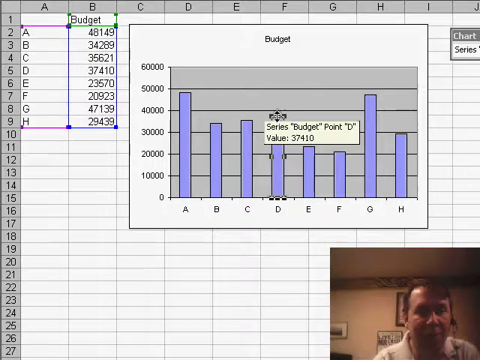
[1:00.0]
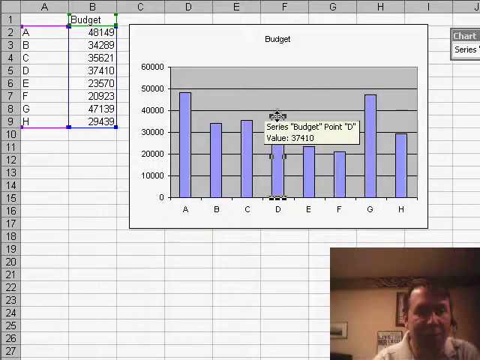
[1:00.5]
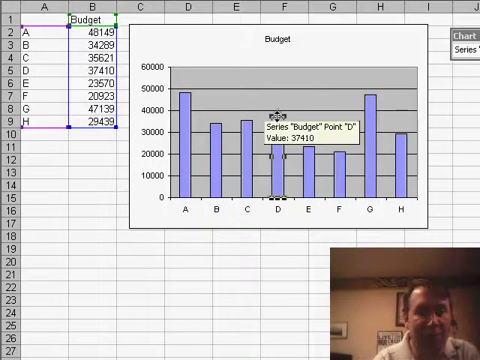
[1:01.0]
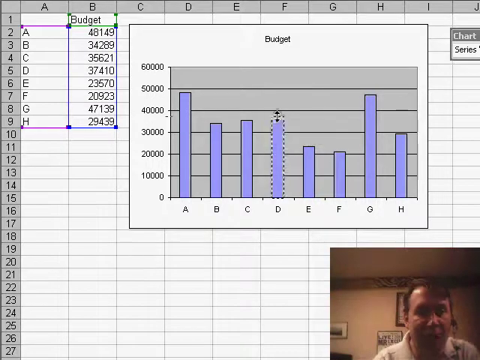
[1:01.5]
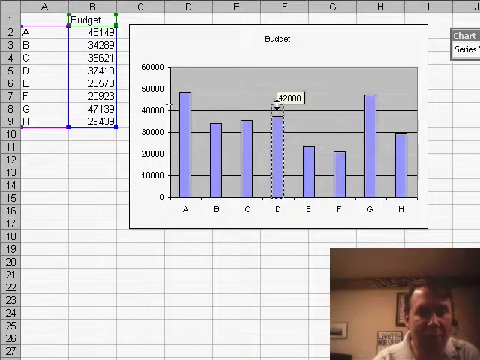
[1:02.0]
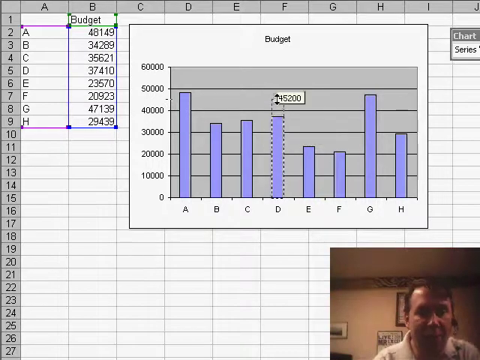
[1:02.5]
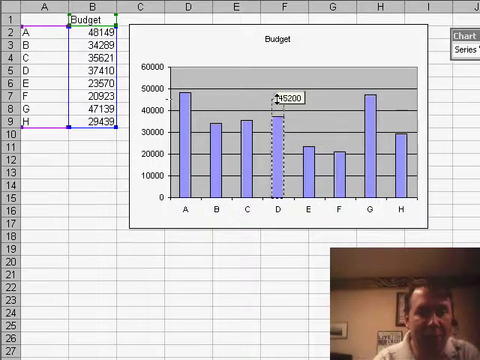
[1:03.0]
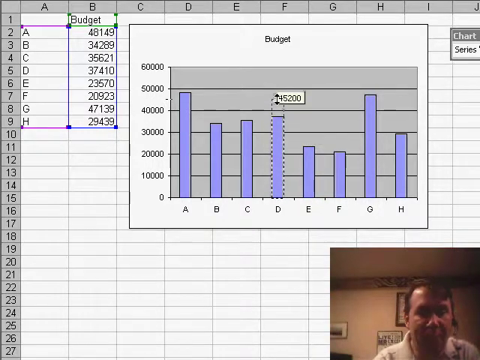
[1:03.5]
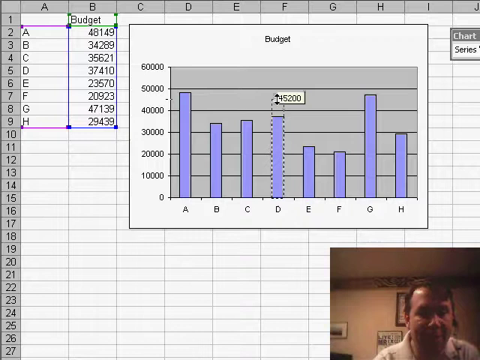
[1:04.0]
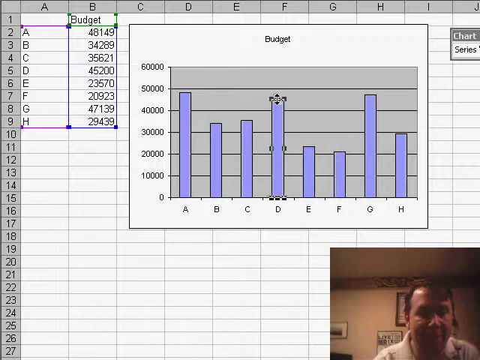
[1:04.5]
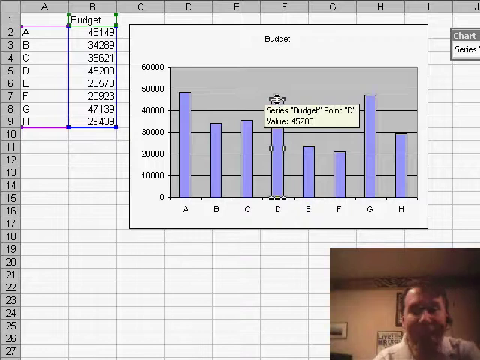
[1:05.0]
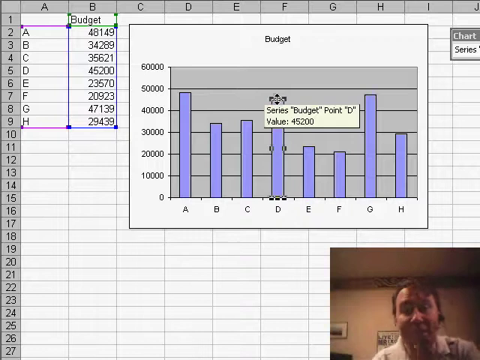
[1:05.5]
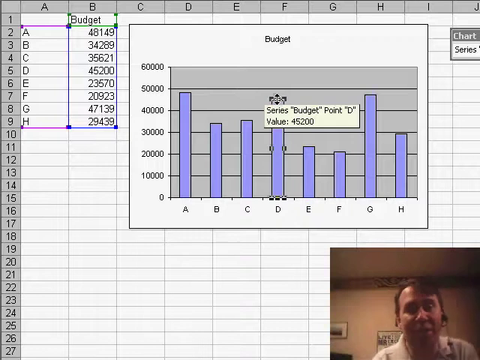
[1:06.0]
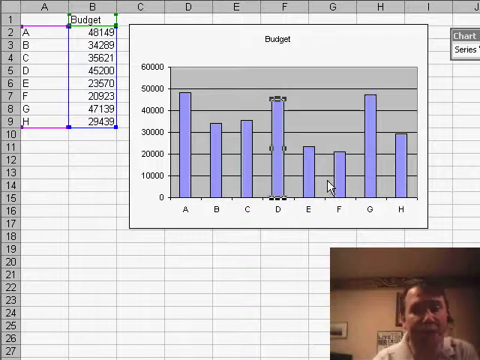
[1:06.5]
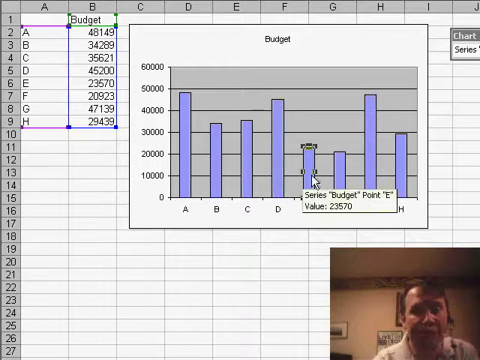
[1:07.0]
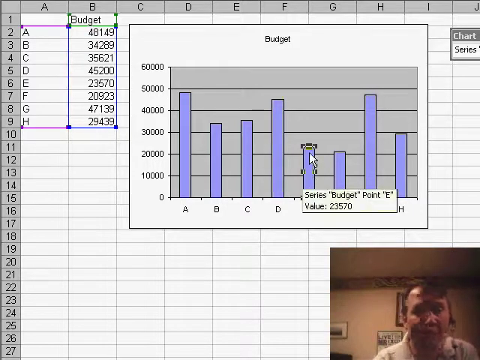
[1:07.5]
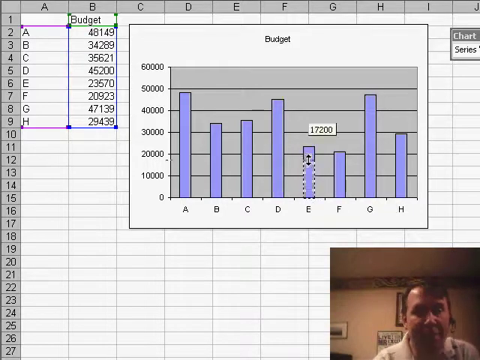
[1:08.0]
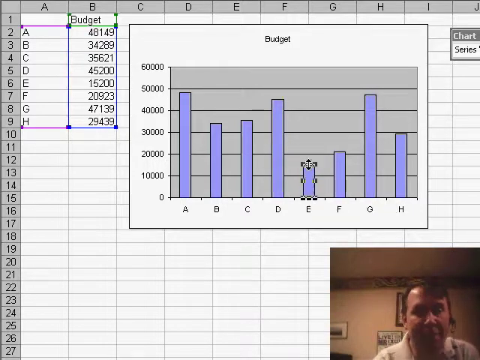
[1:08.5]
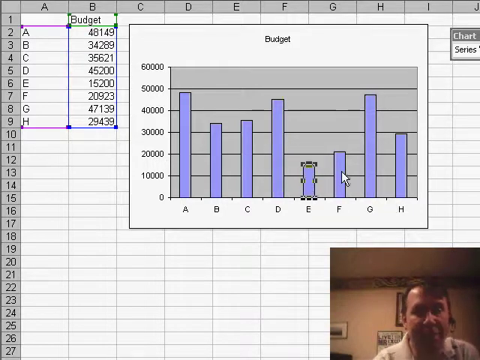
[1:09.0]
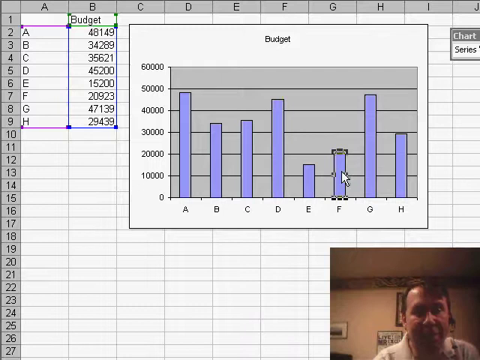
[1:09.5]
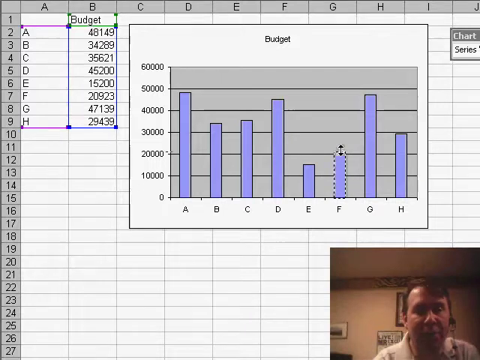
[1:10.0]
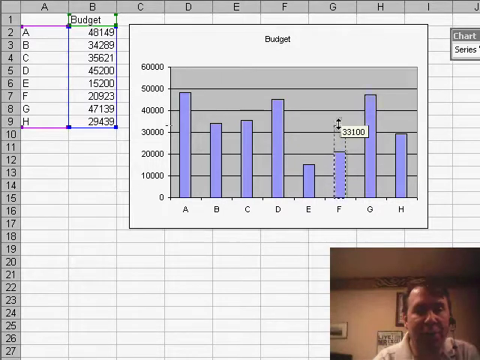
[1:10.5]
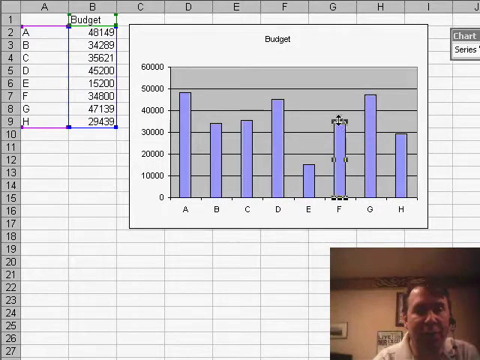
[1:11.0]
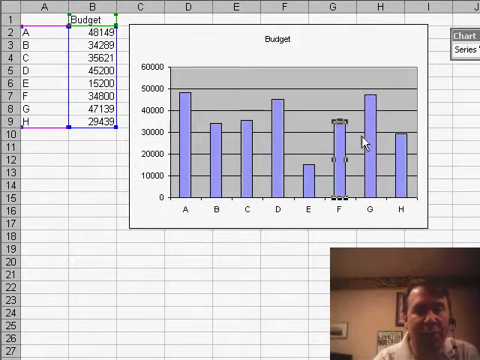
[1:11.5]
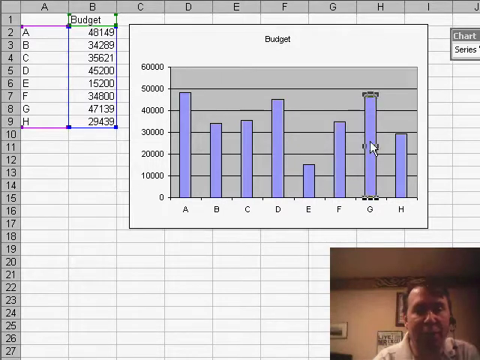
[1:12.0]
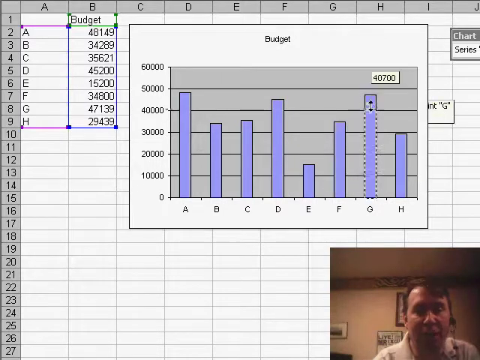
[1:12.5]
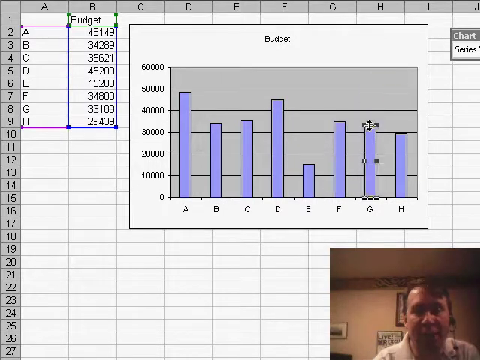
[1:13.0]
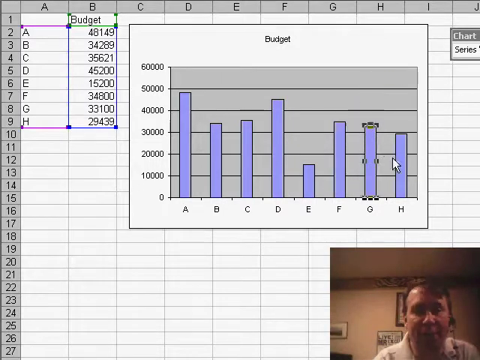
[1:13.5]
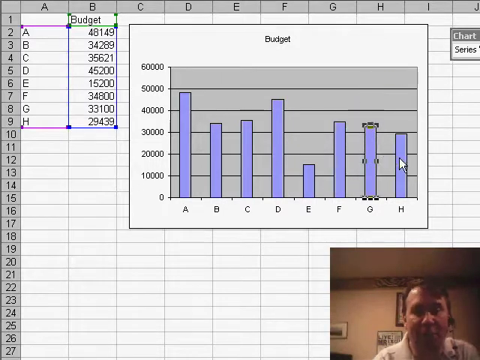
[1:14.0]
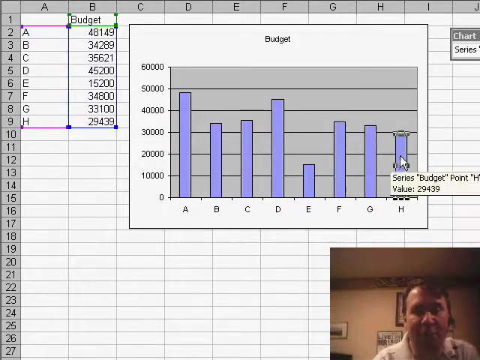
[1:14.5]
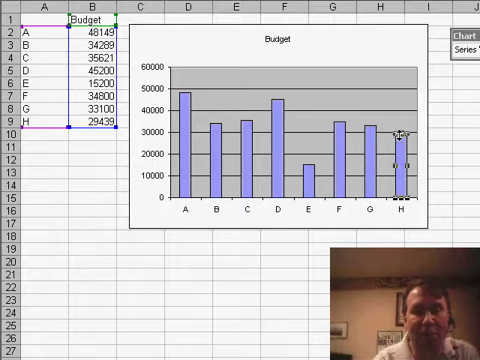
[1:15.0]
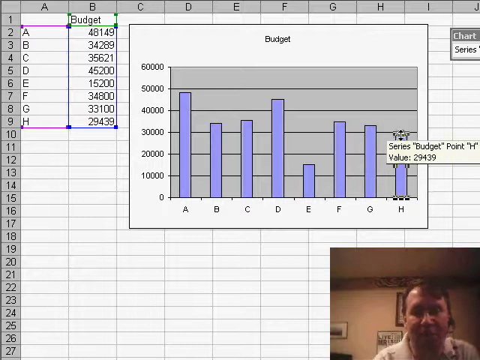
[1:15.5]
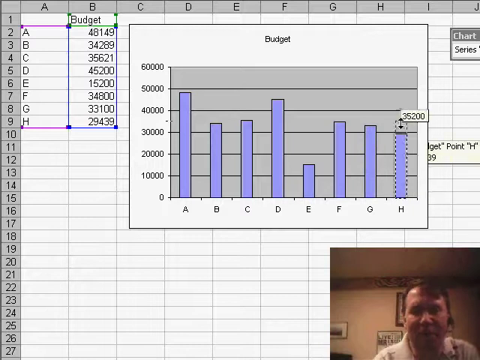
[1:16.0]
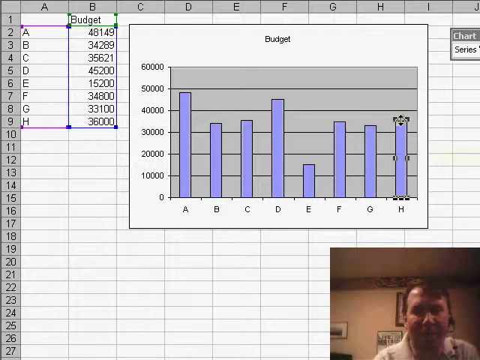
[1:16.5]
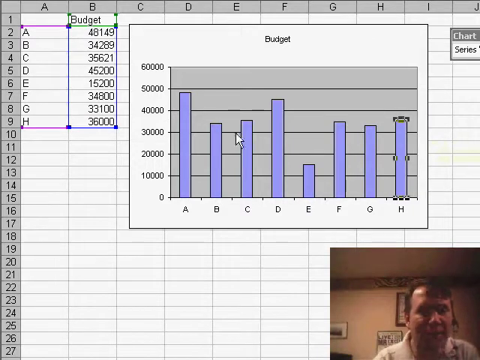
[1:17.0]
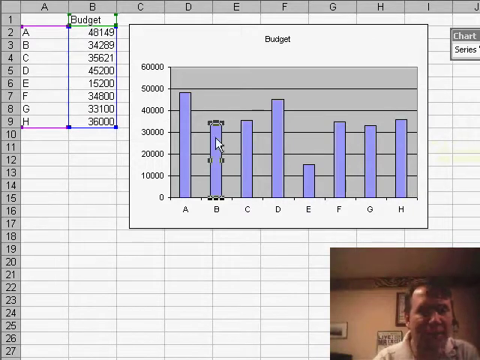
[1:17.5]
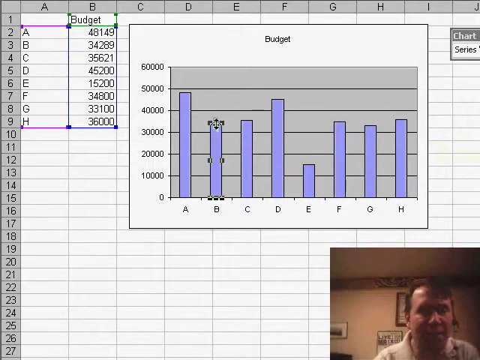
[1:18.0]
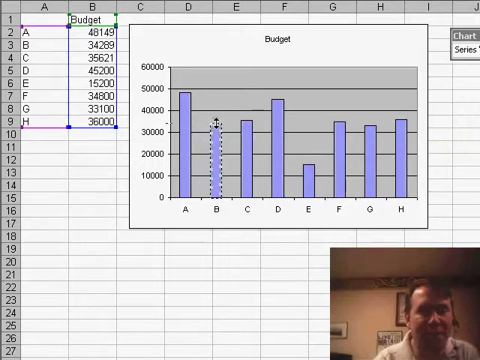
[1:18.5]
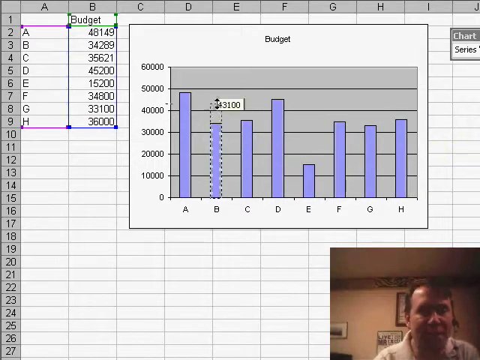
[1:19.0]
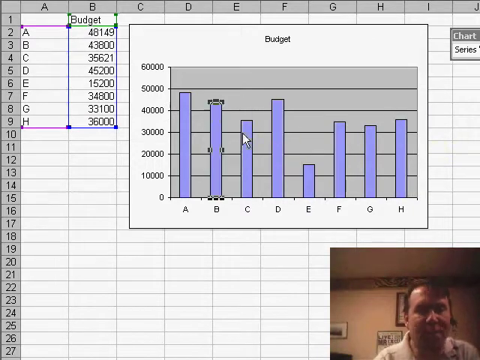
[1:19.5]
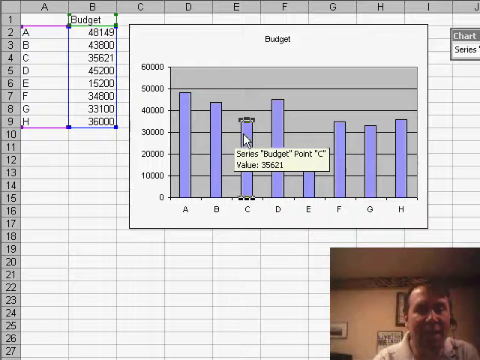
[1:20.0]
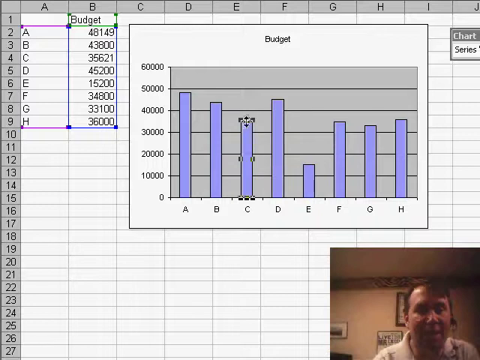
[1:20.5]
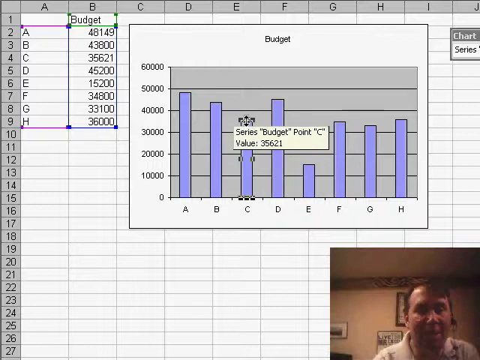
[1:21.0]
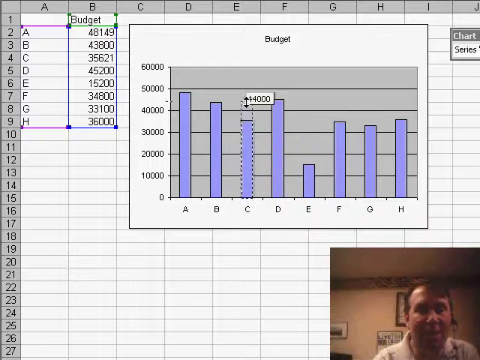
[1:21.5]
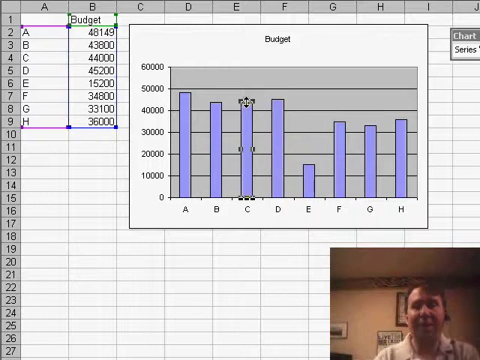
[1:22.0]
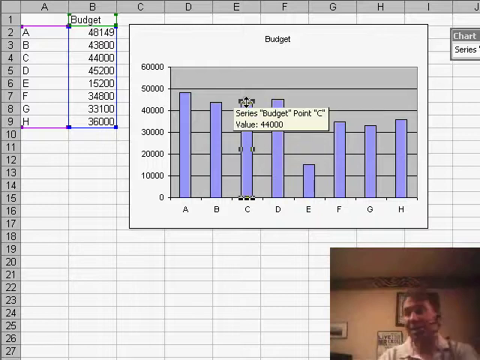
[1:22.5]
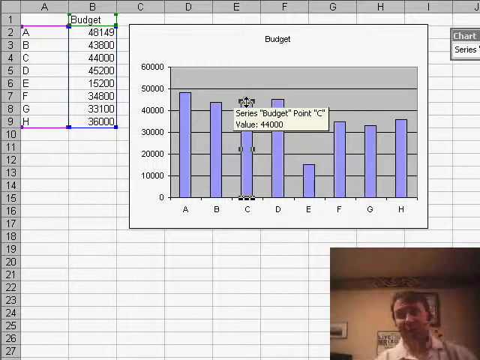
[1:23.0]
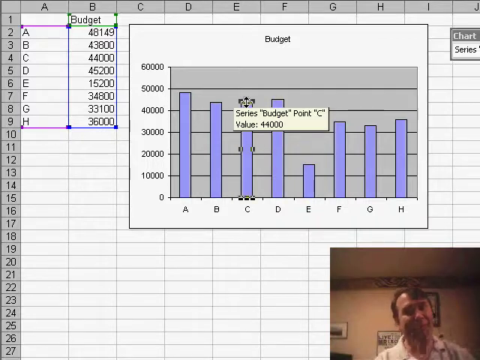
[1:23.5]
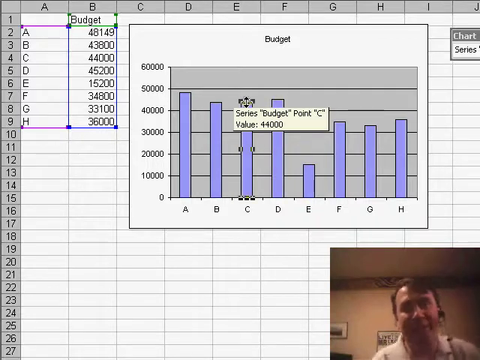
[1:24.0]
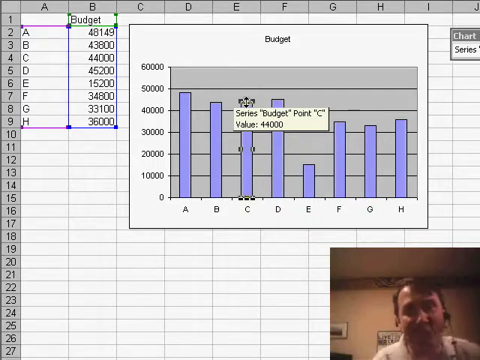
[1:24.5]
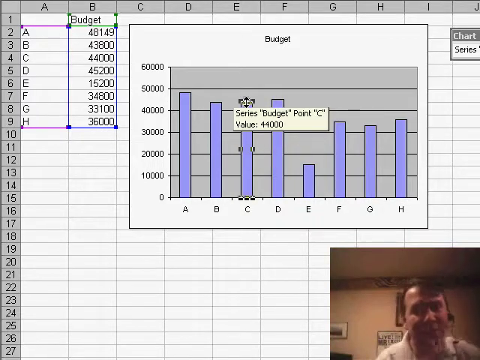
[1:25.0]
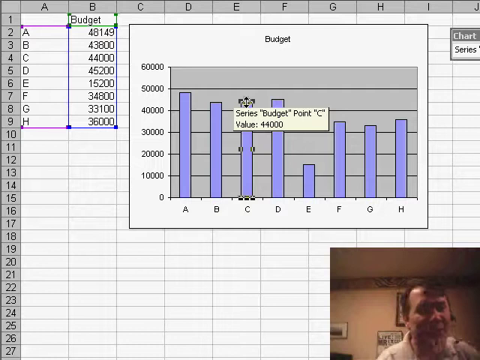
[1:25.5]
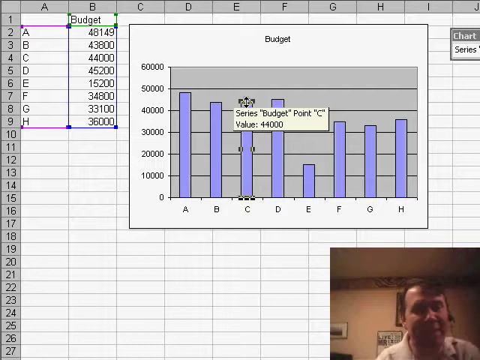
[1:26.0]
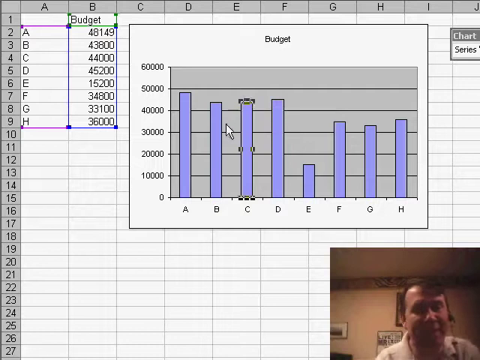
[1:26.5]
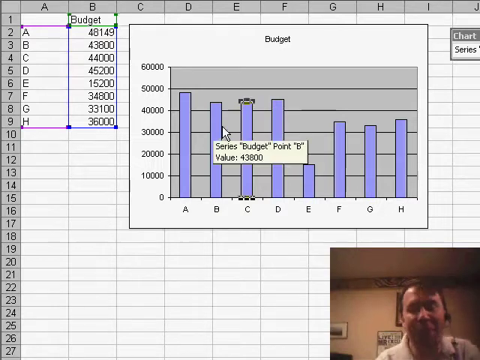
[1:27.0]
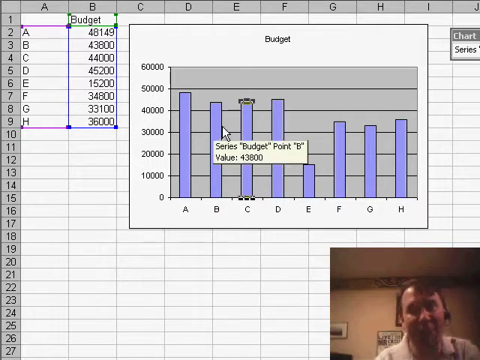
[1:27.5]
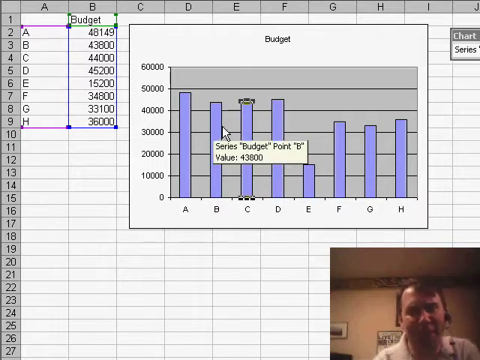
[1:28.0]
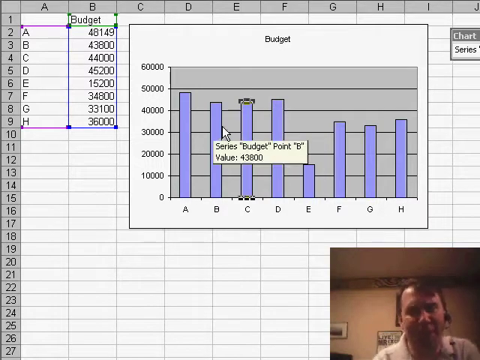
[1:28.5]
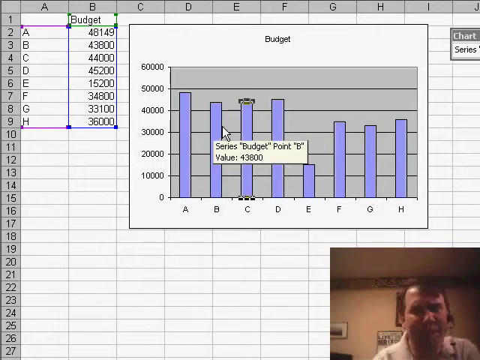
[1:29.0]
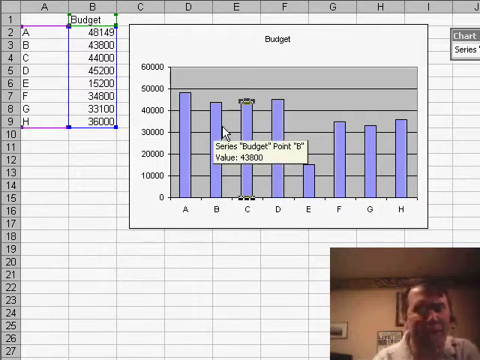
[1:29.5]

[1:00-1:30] The Excel spreadsheet is in the background. On the left, "budget" is typed under column B, with the different amounts listed as numbers beneath it going down to the letter H. On the right is the budget bar graph, titled "budget". In the lower right corner, the man wearing a headset speaks. He raises and lowers the budget amounts in the bar graph, which changes the numbers on the left side of the screen where the amounts were typed in.